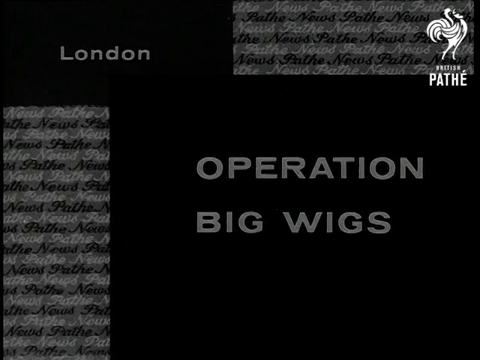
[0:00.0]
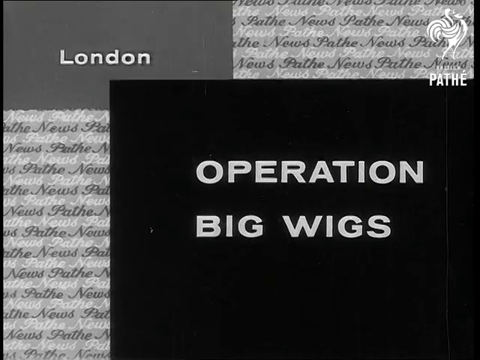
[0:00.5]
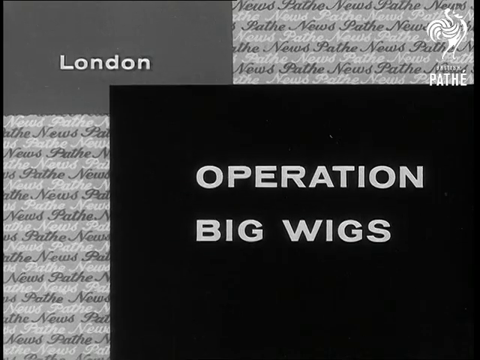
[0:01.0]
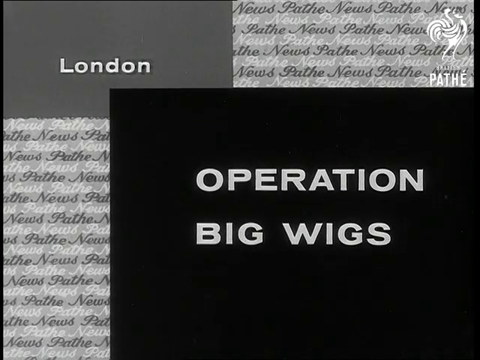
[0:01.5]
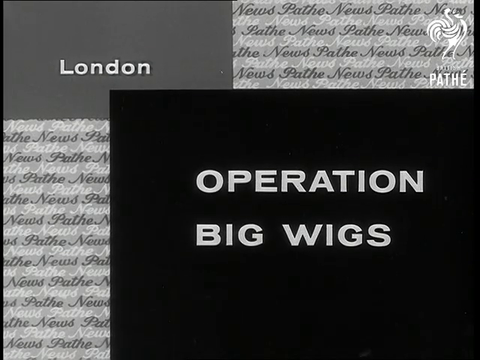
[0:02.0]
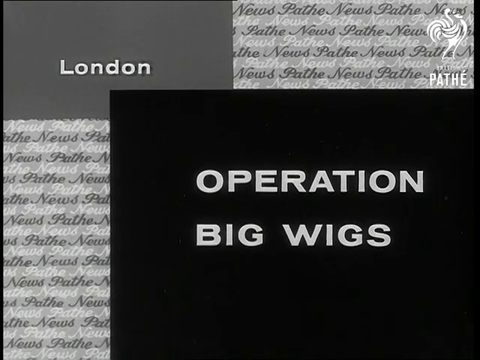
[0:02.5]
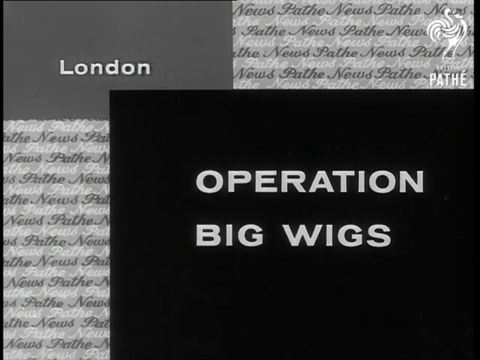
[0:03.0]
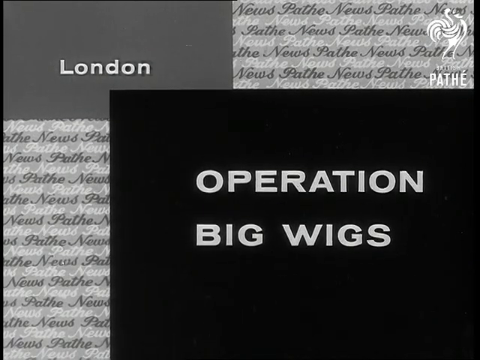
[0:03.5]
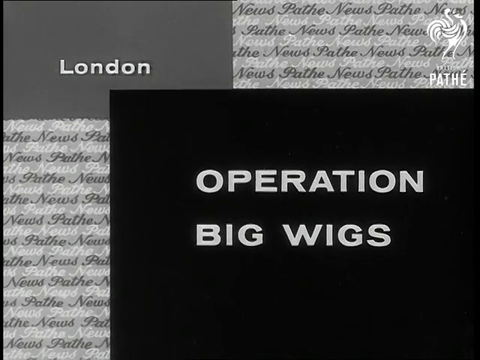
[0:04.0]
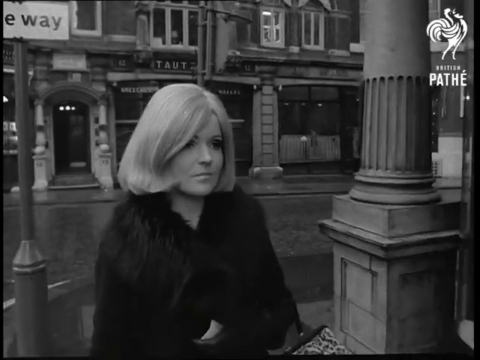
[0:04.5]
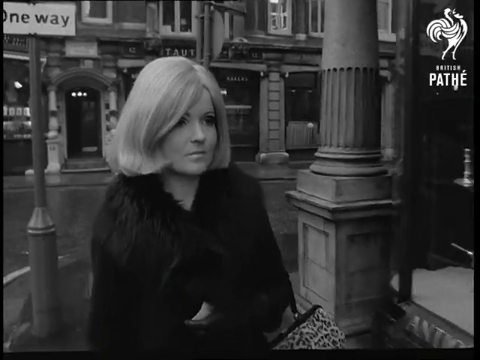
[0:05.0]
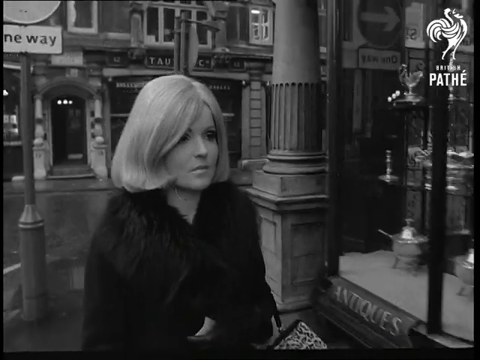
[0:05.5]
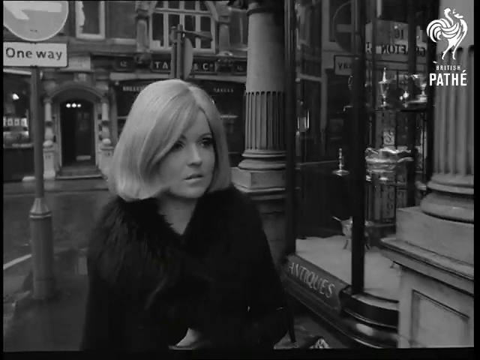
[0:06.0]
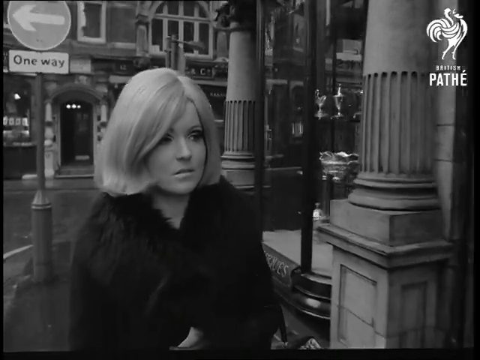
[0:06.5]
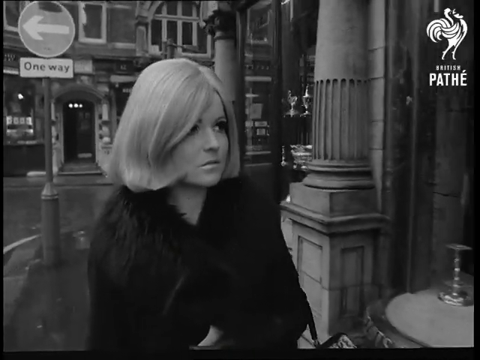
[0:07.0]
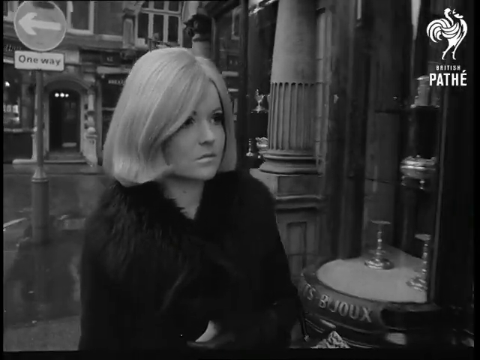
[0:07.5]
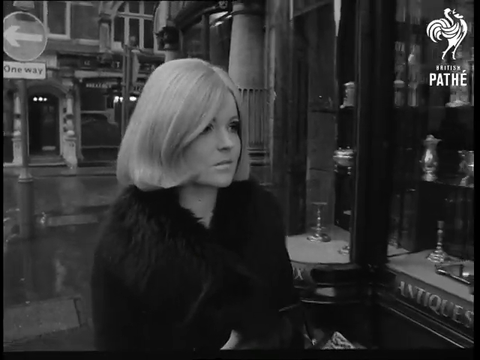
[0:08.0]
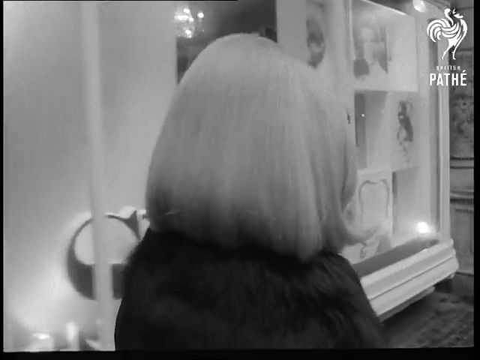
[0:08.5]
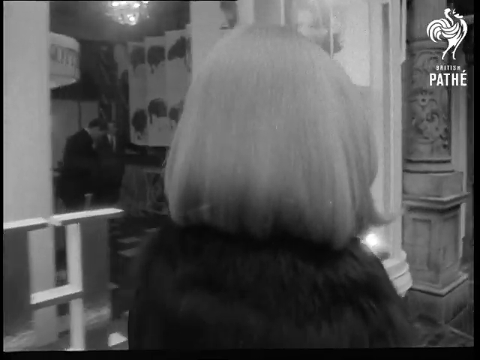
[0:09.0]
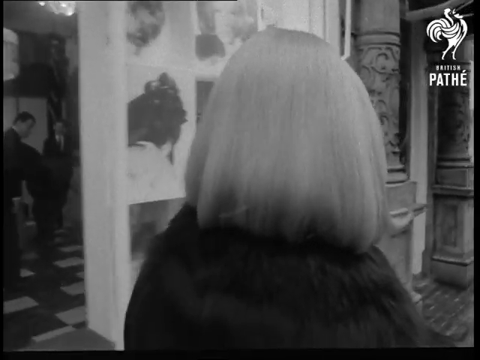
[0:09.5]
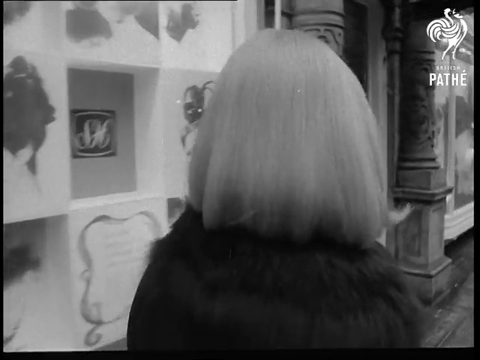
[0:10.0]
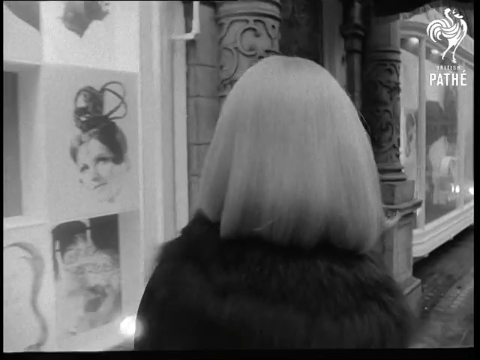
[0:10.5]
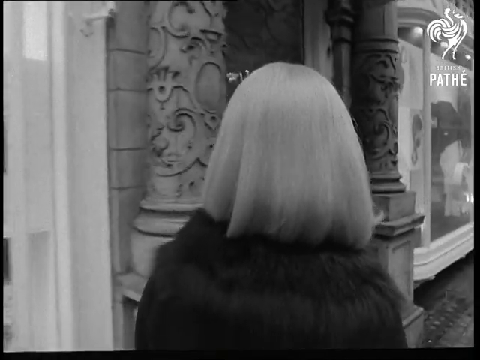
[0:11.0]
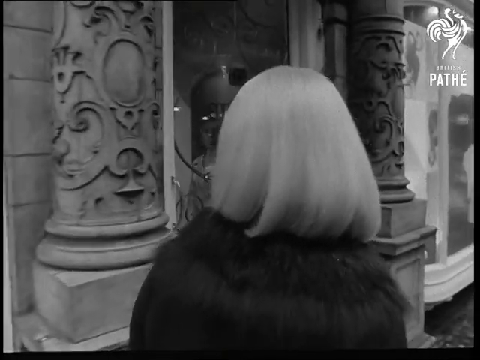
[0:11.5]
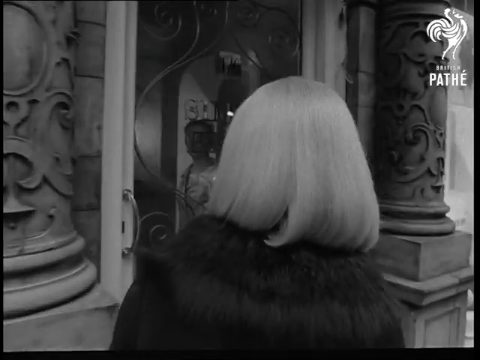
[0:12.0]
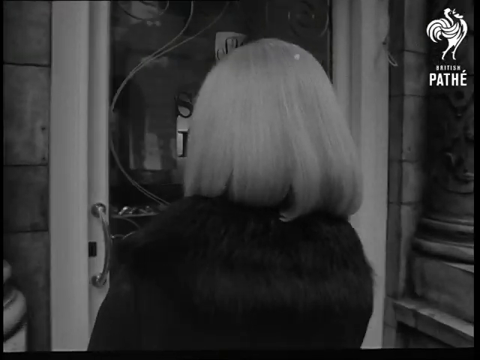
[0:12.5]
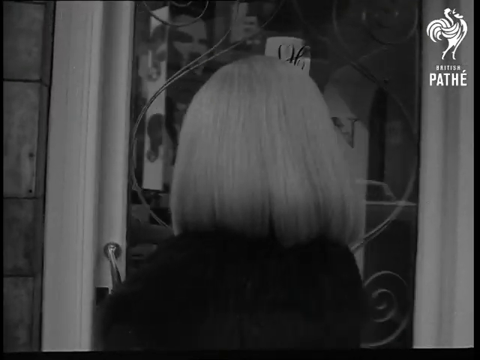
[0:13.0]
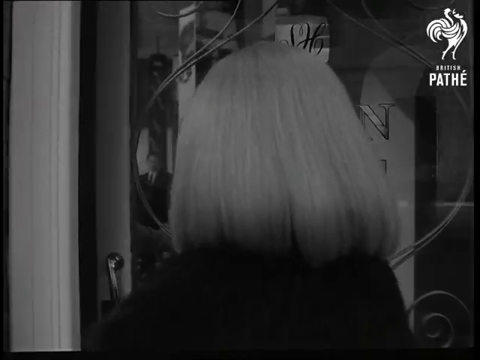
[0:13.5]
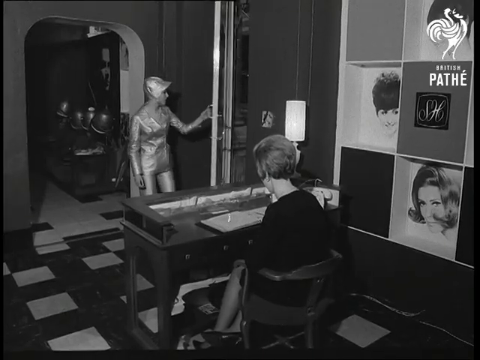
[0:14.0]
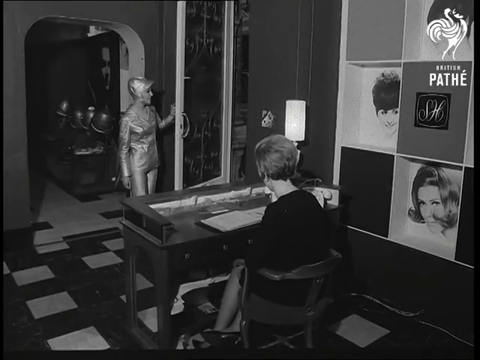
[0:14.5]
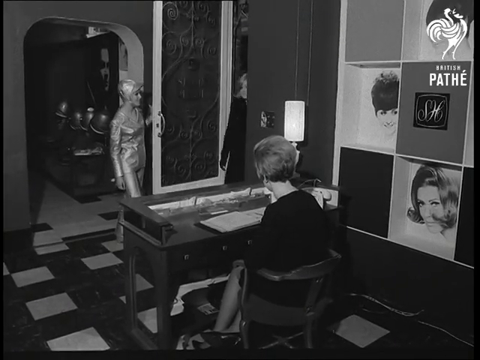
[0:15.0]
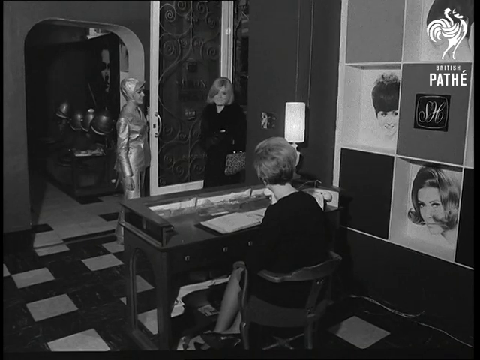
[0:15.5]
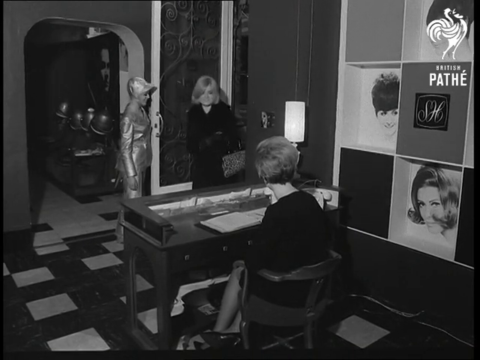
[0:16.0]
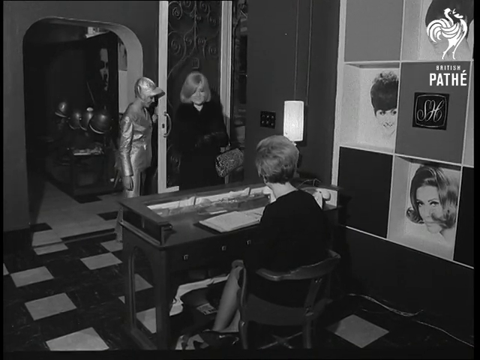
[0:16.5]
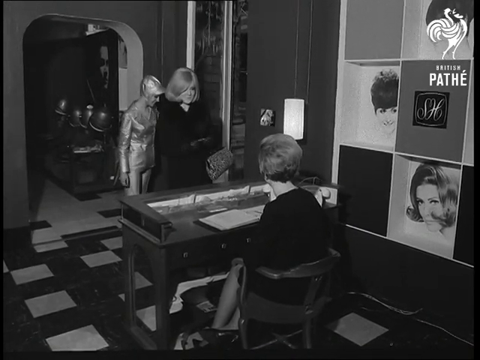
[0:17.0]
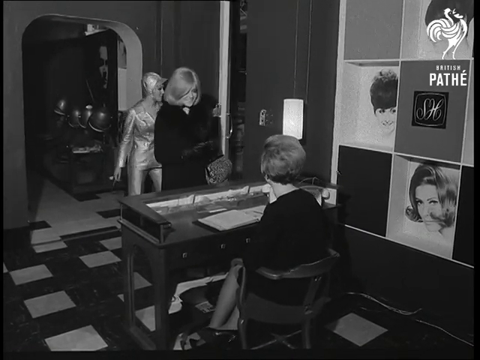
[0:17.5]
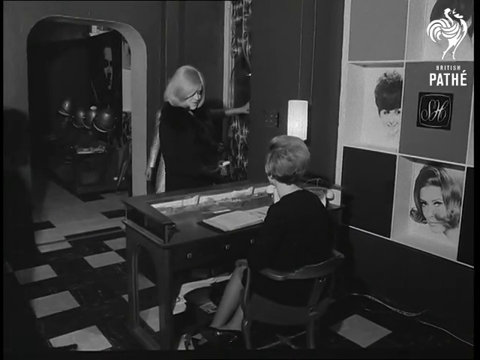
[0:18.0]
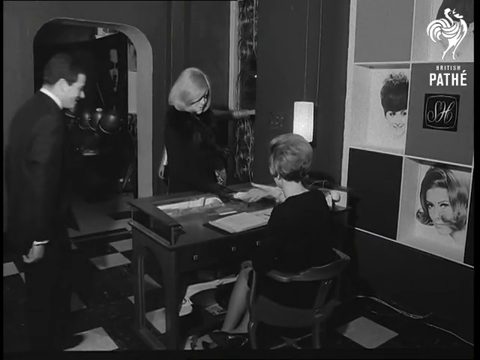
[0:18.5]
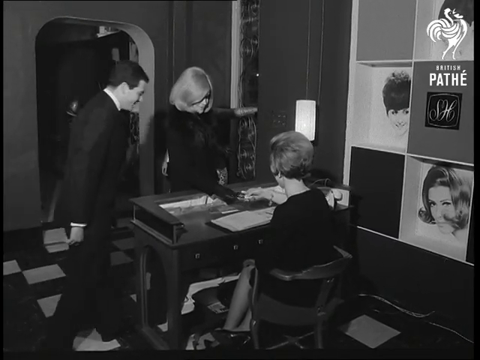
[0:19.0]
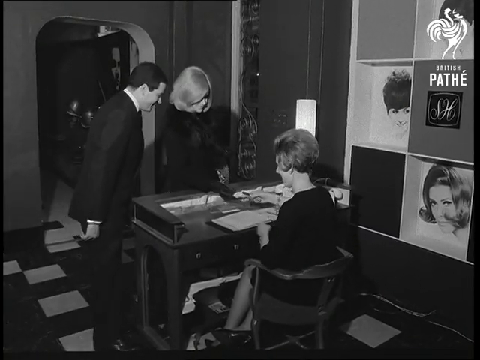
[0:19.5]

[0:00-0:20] The video, titled Operation Big Wigs, is in black and white and is set in London. In the top left of the screen is a gray rectangle with "London" in white letters, and in the top right is a white logo with "P-A-T-H-E" underneath. It appears to have been filmed in the 1960s. A woman in her thirties, wearing a black fur coat and a blonde wig and carrying a leopard purse, walks down the street and enters a wig salon with a black and white checkered floor. The door is opened by a woman wearing a futuristic suit. Another woman sits behind a desk with her back to the camera, and photos of women wearing wigs are in the background on the right of the screen. A man in a dark suit approaches the desk from the left of the screen.